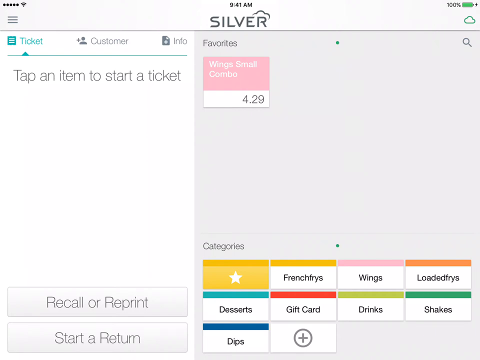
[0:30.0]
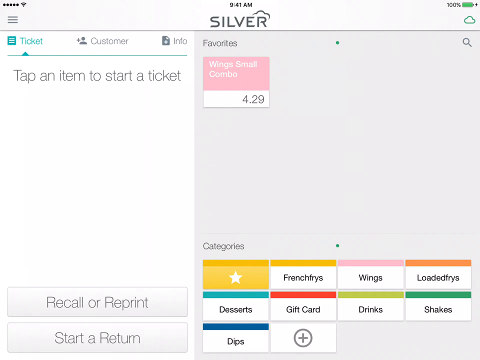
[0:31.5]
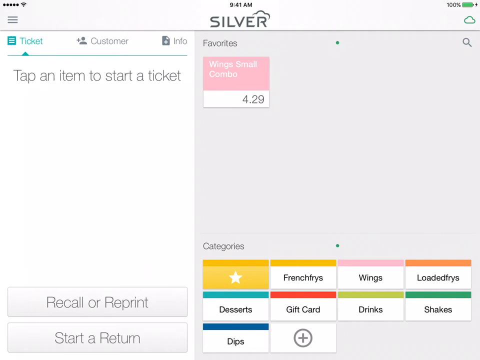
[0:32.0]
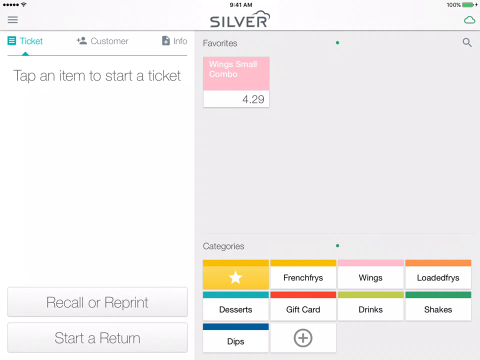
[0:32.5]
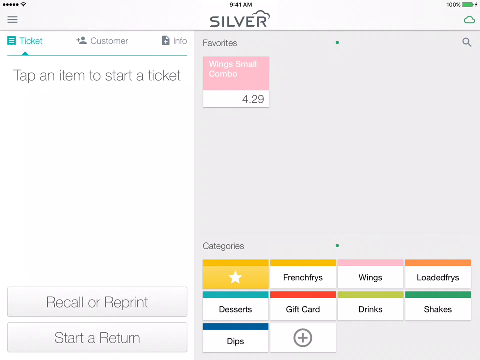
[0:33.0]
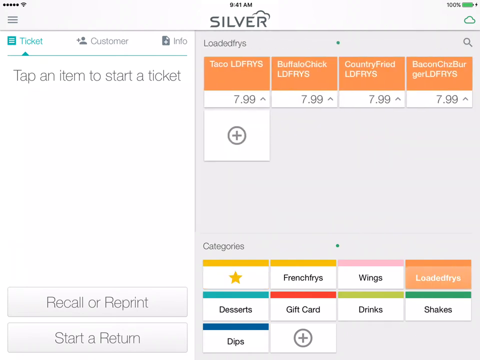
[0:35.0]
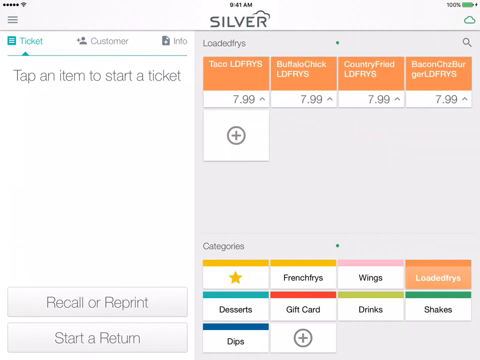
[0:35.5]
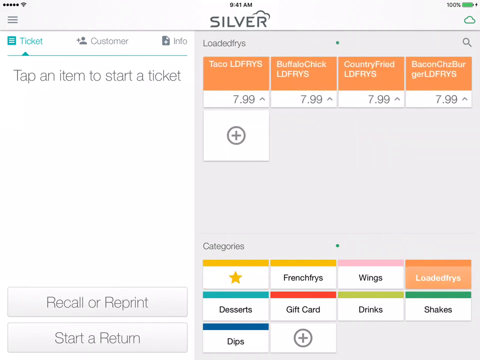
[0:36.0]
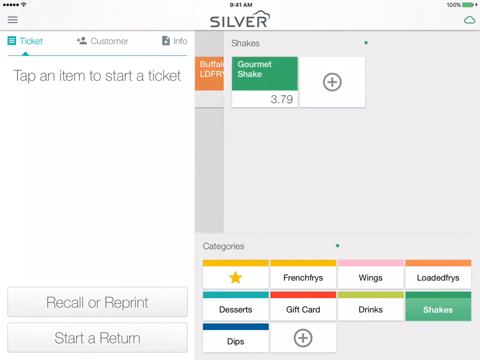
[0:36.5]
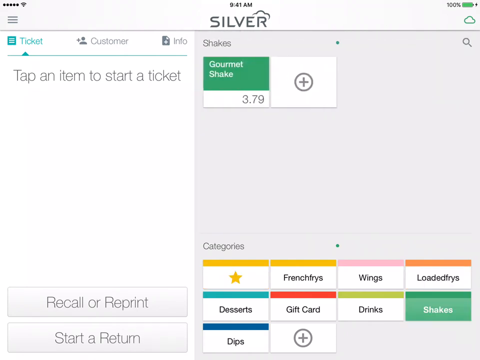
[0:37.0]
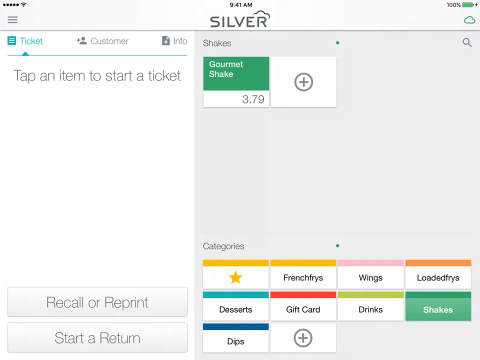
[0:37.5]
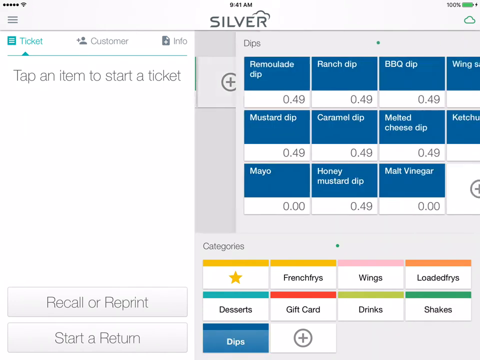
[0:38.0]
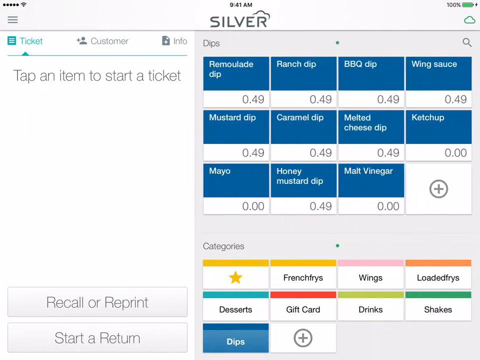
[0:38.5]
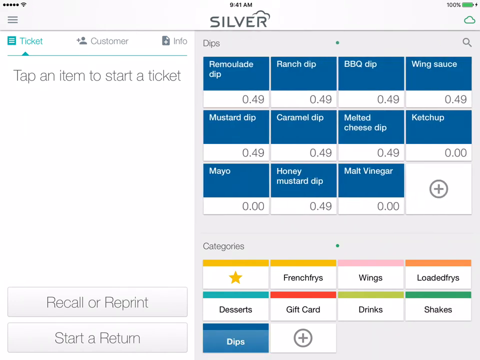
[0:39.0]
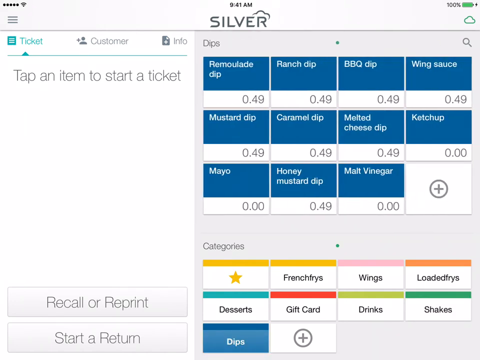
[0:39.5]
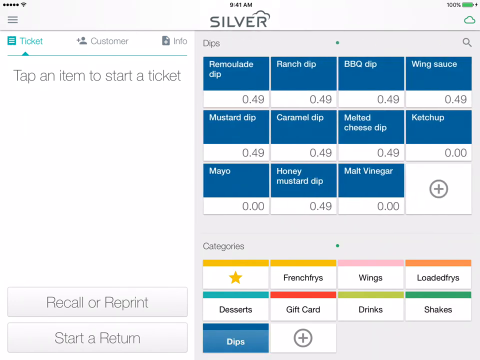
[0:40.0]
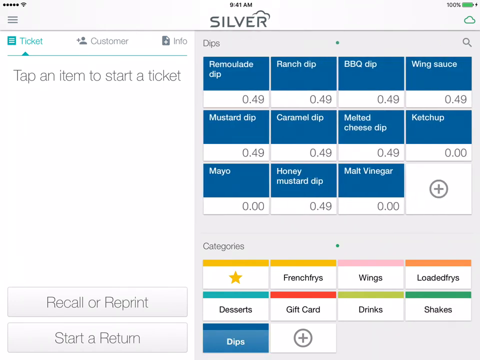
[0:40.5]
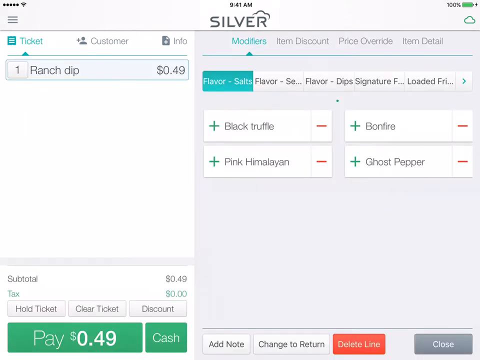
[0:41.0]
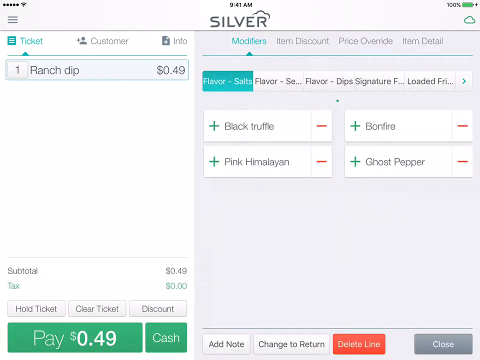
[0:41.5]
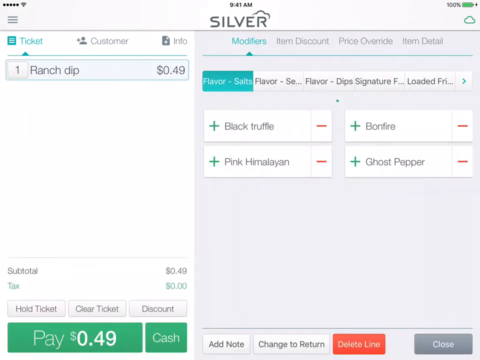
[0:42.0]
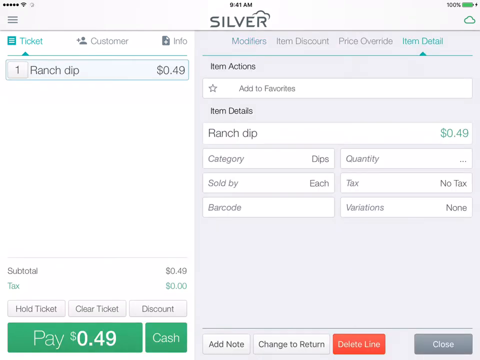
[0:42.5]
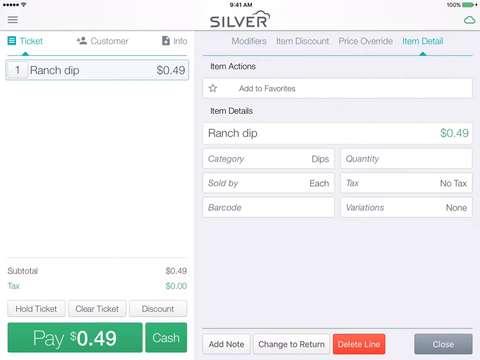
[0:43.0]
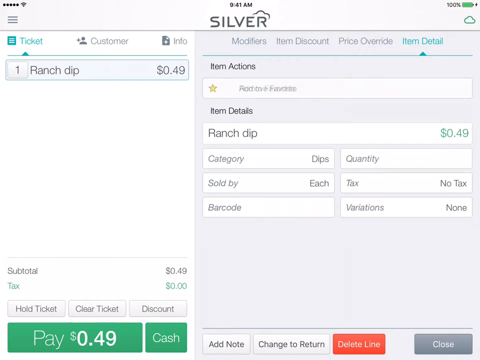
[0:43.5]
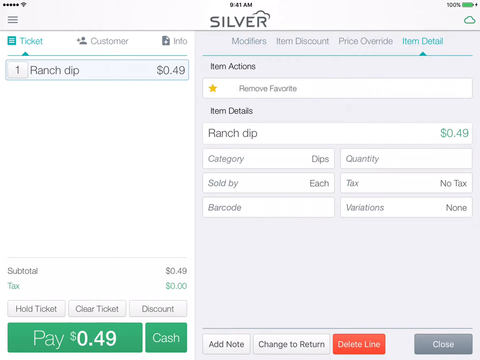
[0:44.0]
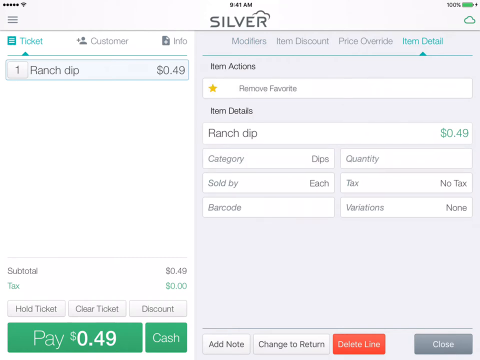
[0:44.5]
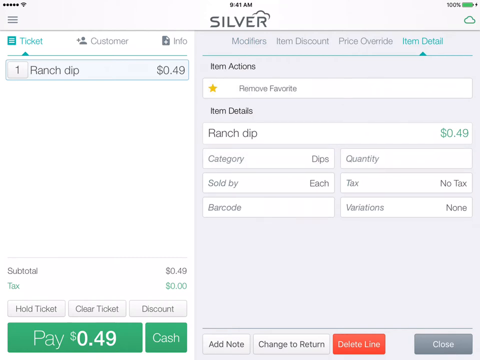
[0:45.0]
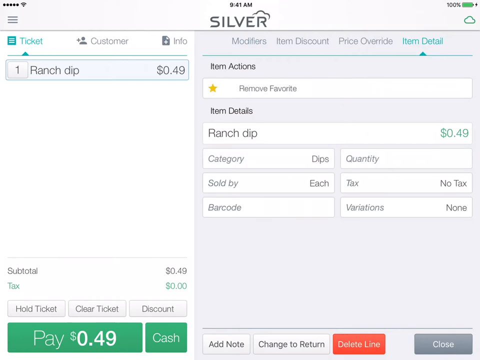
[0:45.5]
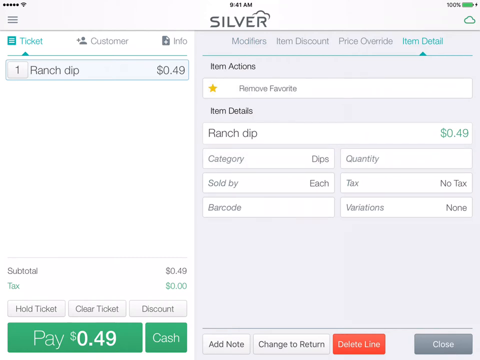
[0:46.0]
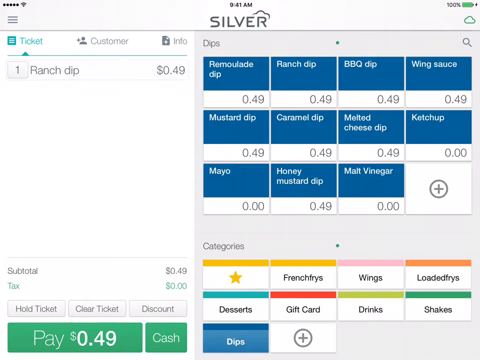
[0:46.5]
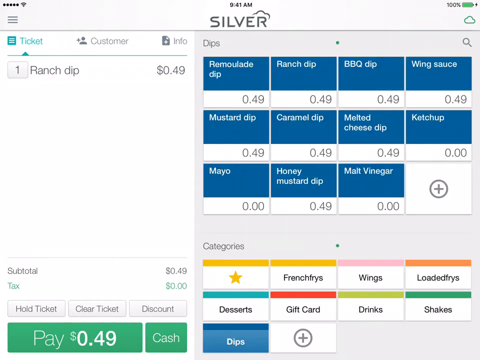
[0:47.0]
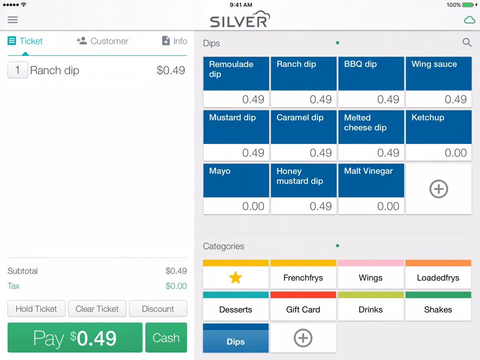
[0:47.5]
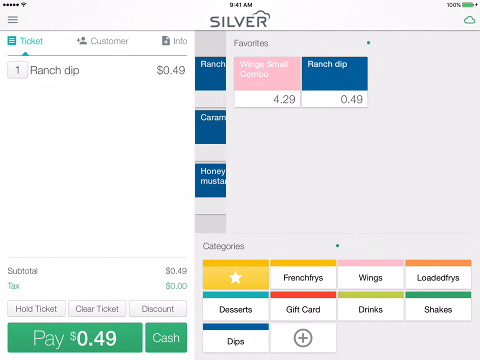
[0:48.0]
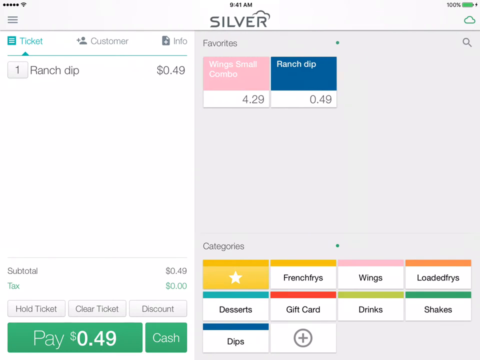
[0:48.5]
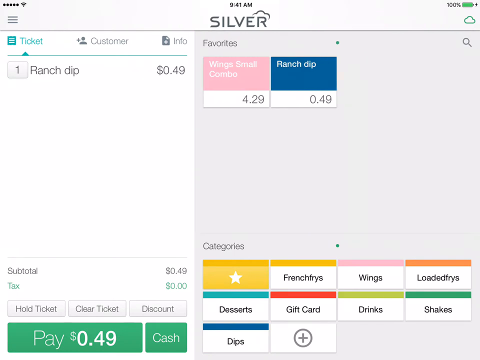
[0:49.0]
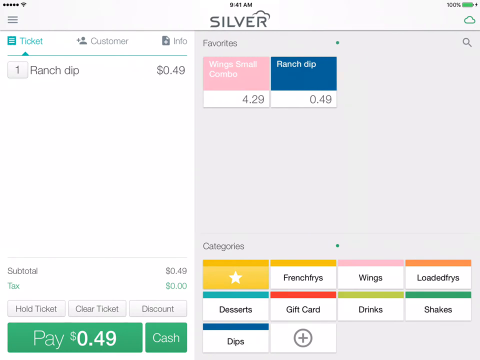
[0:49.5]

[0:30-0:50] The user clicks the Loaded Fries button, which has an orange horizontal bar on top and a rectangle reading "Loaded Fries" in black text on a white field. When clicked, it becomes white text on a lighter orange field, and the contents of the gray area change to Taco Loaded Fries, Buffalo Chicken Loaded Fries, Country Fried Loaded Fries and Bacon Cheeseburger Loaded Fries, each $7.99. The user then clicks Shakes, which is now green; the Gourmet Shake at $3.79 is the only option. Next they click Dips, which is blue, and its many options are blue as well, including malt vinegar, caramel dip, wing sauce and ranch dip. It looks like they pick ranch dip, which brings up an item detail menu showing the ranch costing 49 cents, with the quantity changeable and tax added, somewhat like an invoice. The only item selected is the ranch dip for 49 cents, which is the total. The ranch dip is added to the favorites but then is removed somehow.